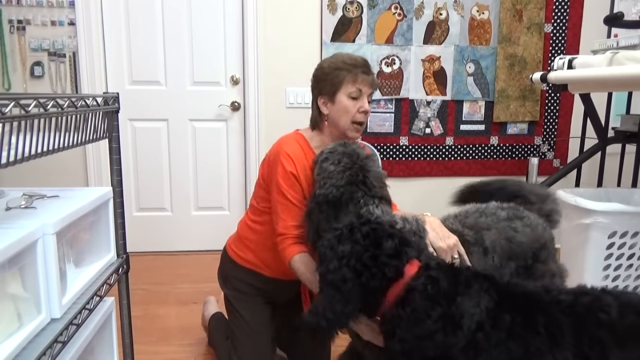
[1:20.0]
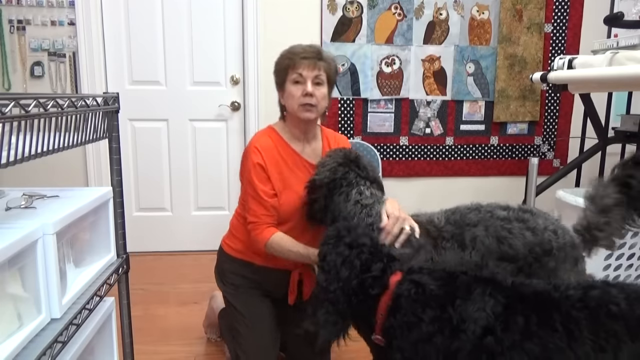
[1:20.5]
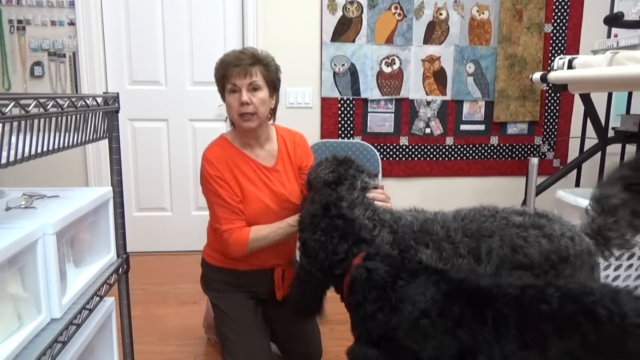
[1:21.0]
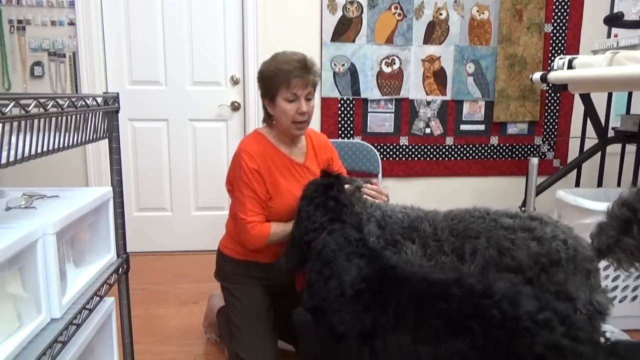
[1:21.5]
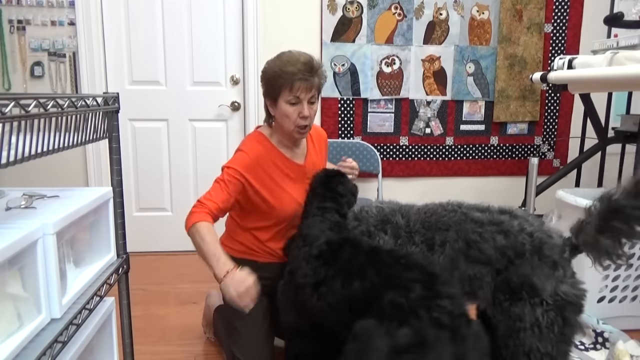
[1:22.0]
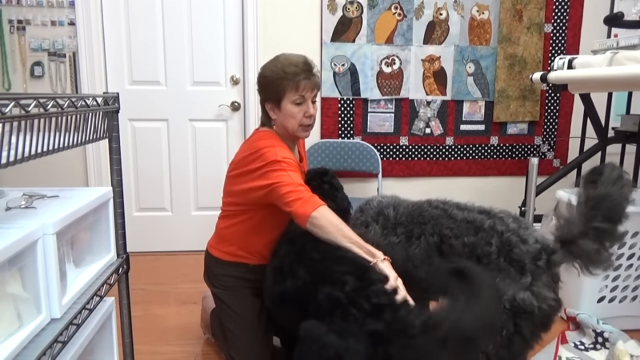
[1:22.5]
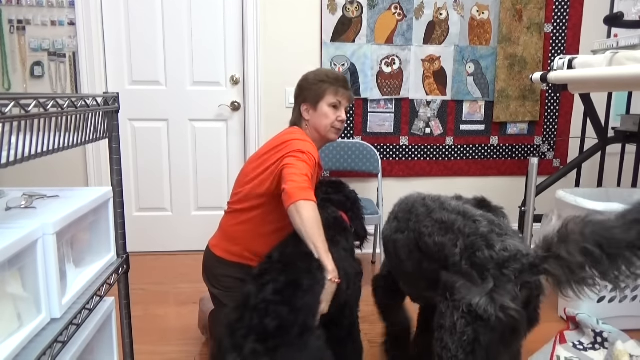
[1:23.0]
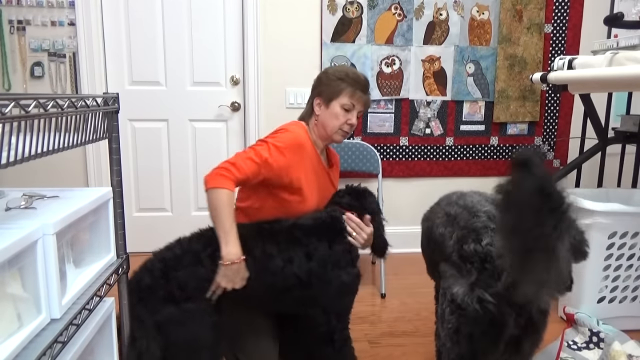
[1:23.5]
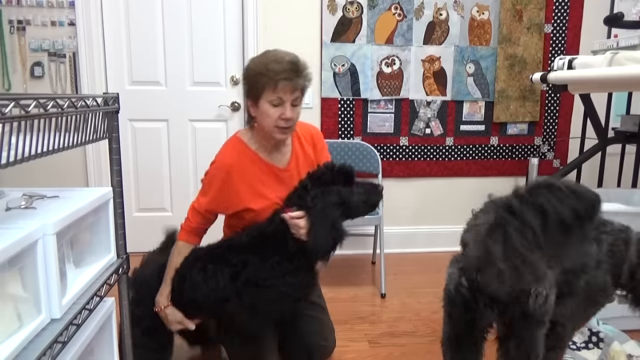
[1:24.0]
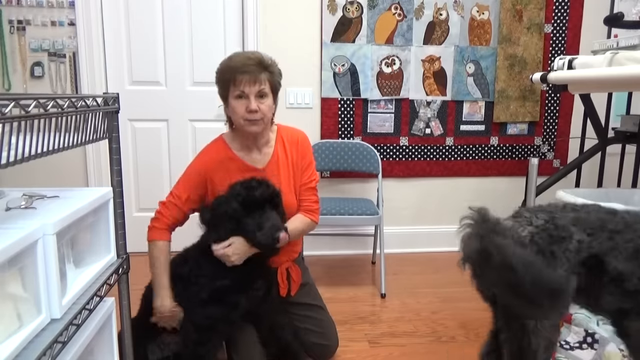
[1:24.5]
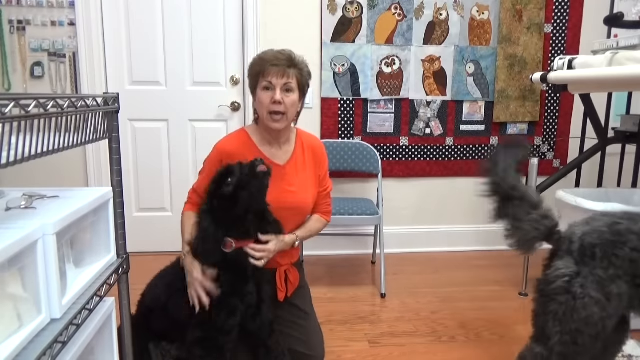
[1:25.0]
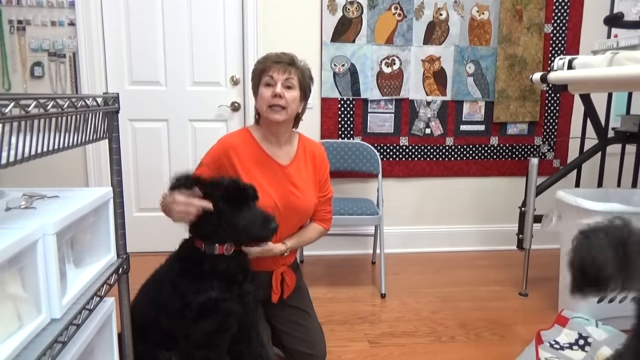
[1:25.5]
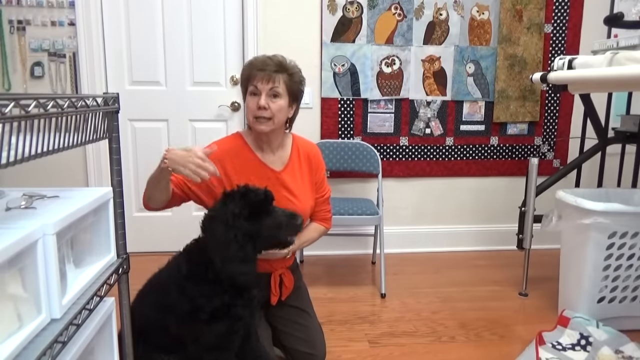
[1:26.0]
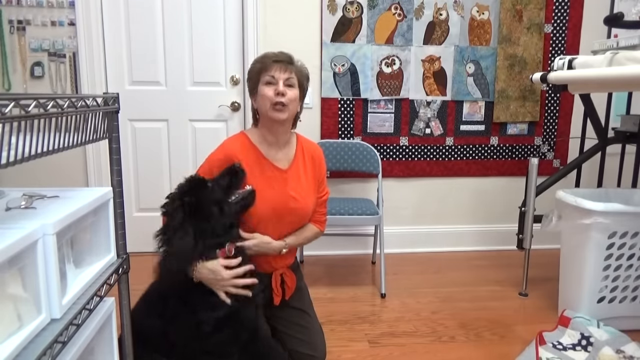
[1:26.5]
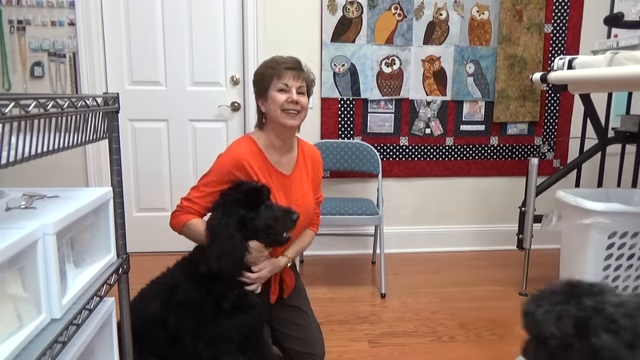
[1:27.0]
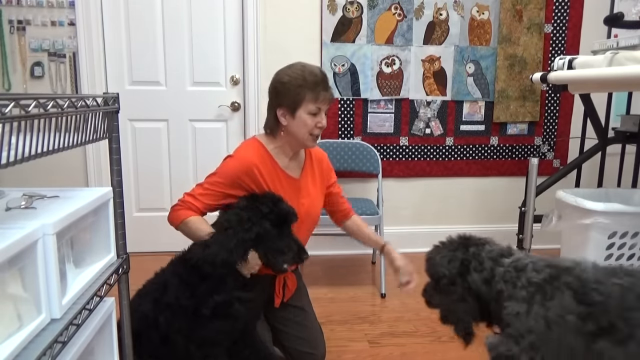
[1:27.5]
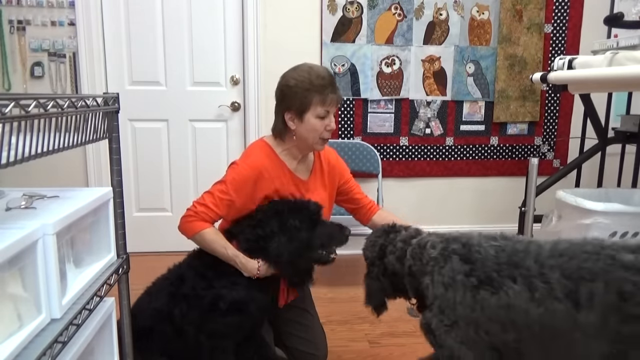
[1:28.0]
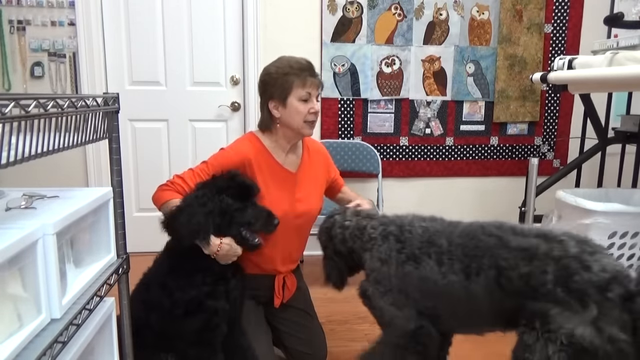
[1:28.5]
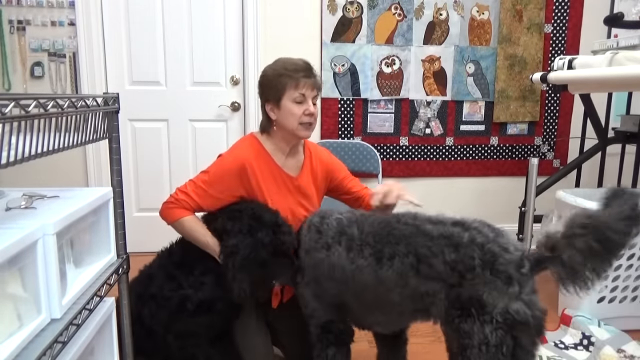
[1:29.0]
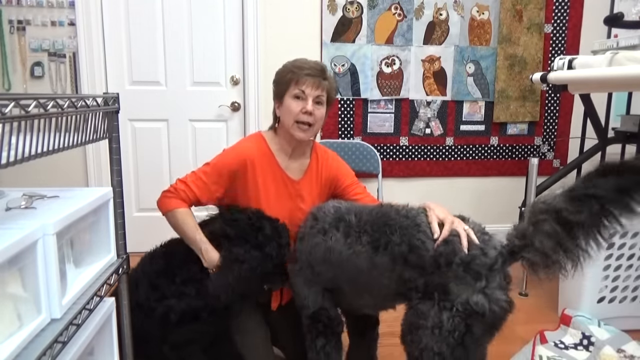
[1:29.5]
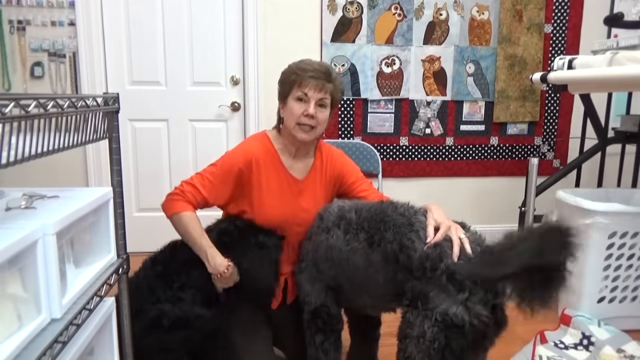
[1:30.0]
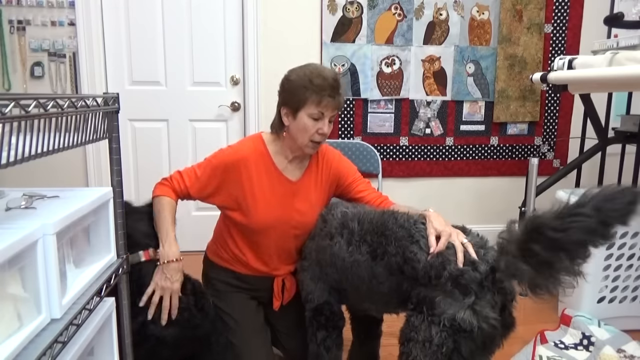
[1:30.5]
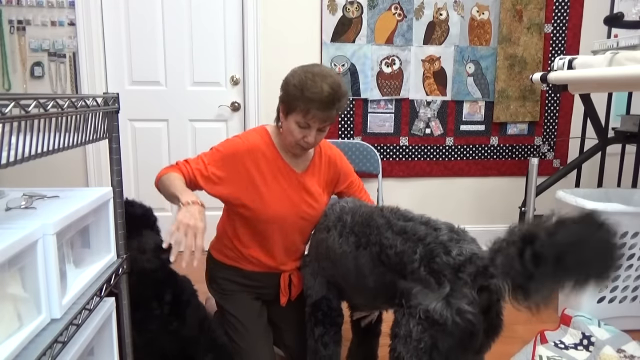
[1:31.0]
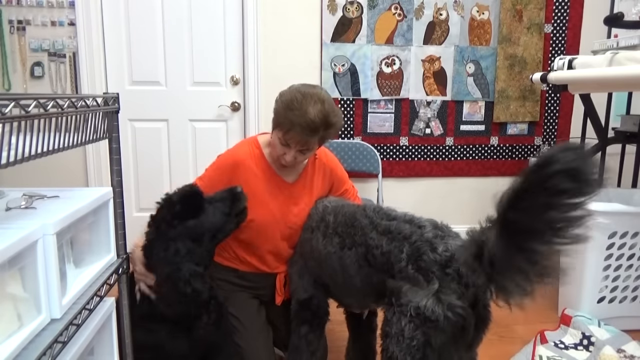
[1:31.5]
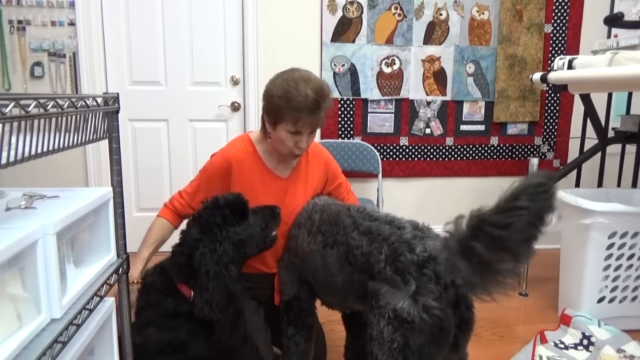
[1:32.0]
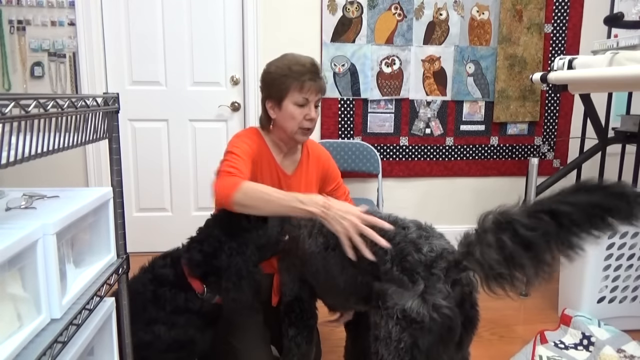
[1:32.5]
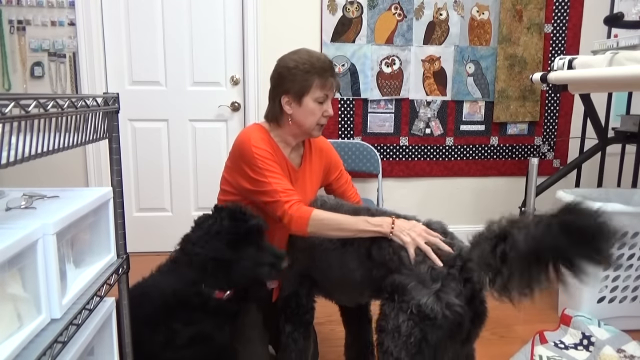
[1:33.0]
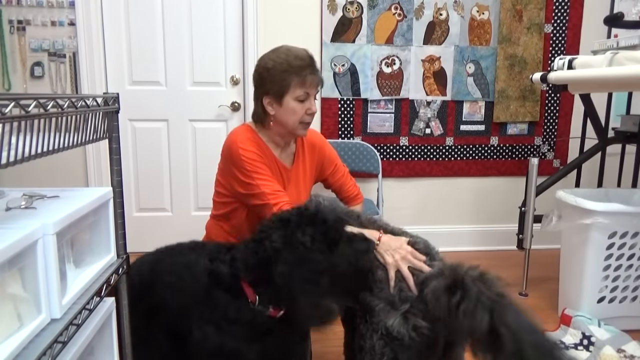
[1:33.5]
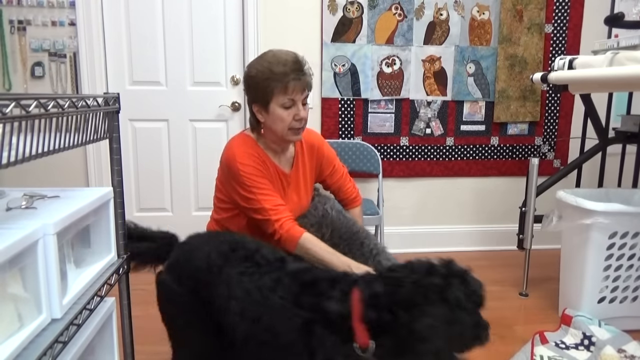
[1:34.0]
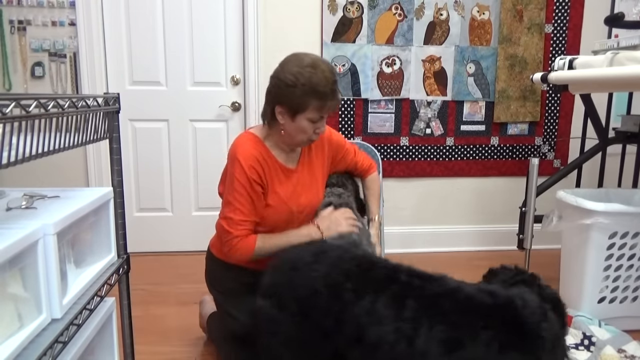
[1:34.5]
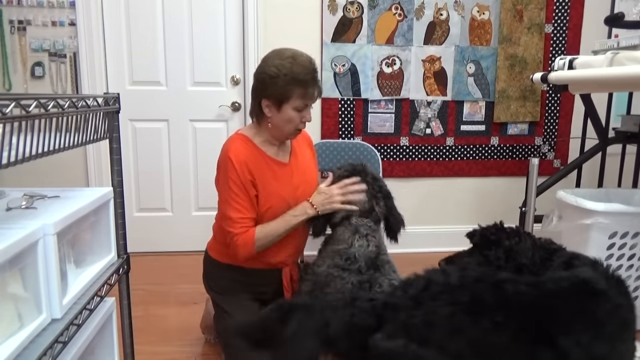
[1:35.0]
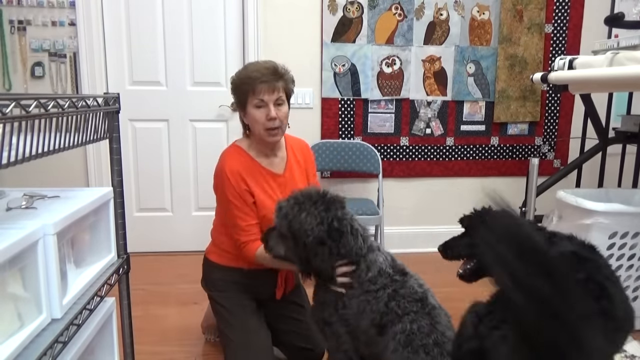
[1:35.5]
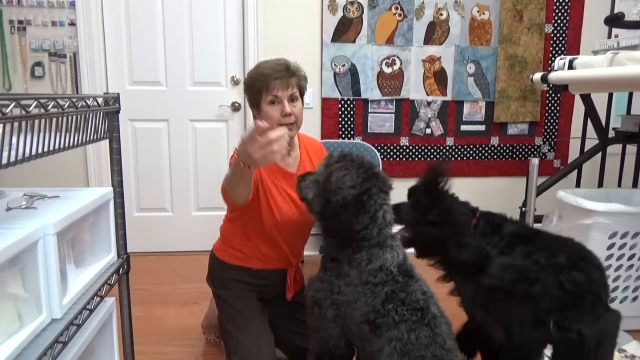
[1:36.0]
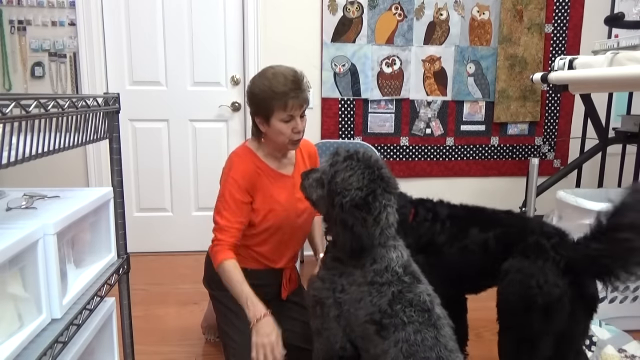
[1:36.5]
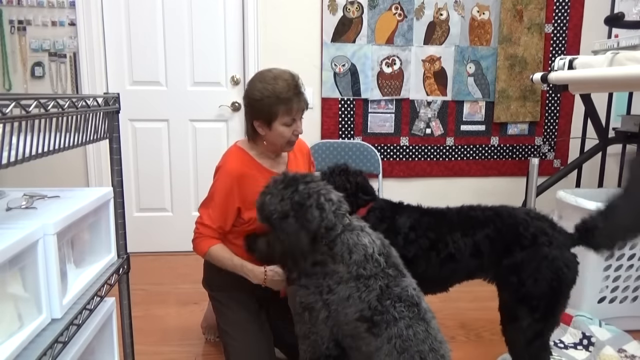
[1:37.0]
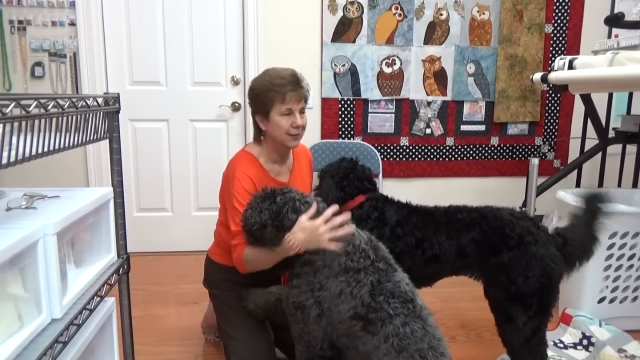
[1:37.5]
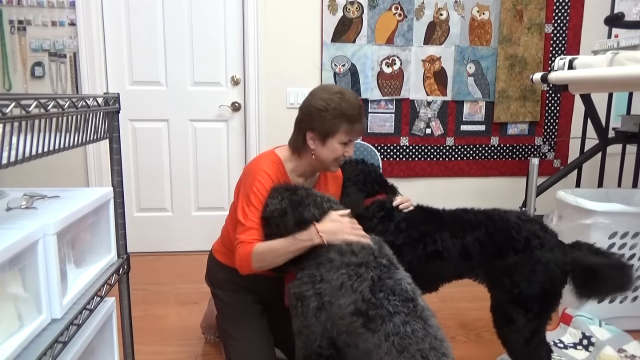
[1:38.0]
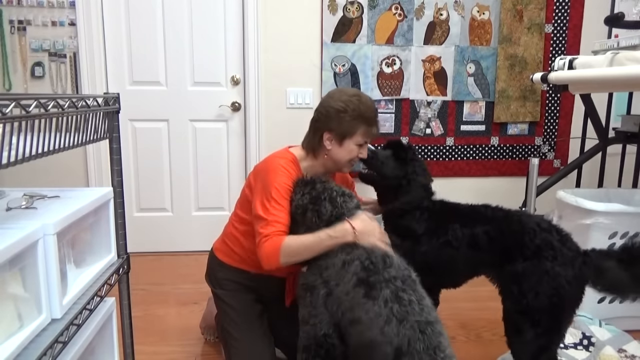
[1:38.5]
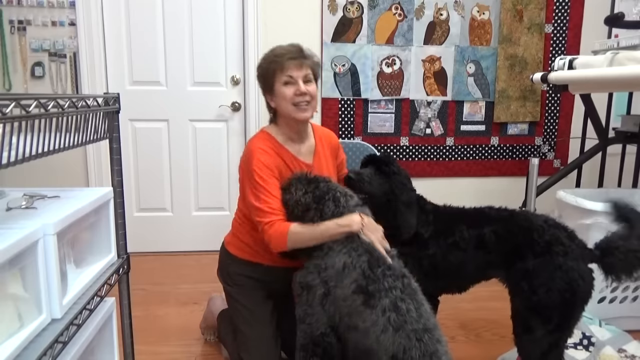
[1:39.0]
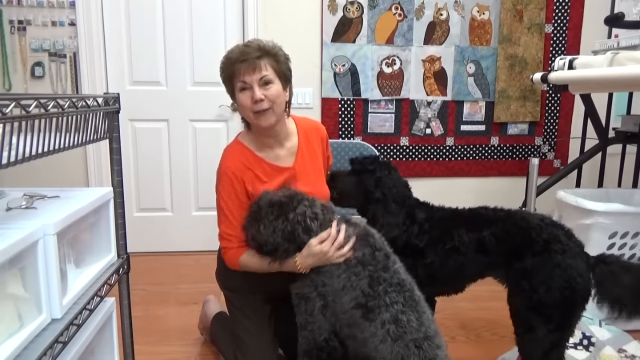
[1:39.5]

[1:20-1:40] The woman moves the darker dog with her hand, and he seems to be trying to escape her grip; the black dog escapes. She then grabs the lighter gray one, trying to put her hands around the dogs, but they keep breaking out of her grip. Finally she is trying to grab the lighter one. She stays on her knees on the ground while the other lab runs around her, and then the picture freezes. The woman wears earrings and some type of wig.